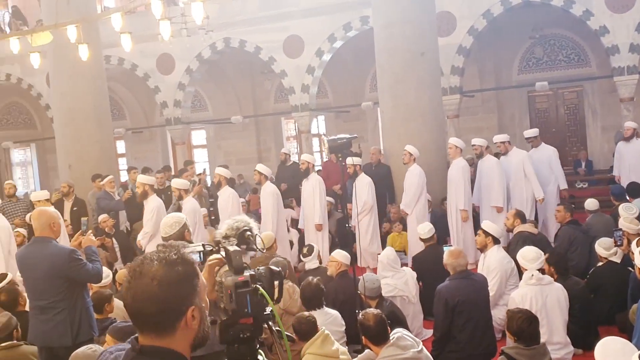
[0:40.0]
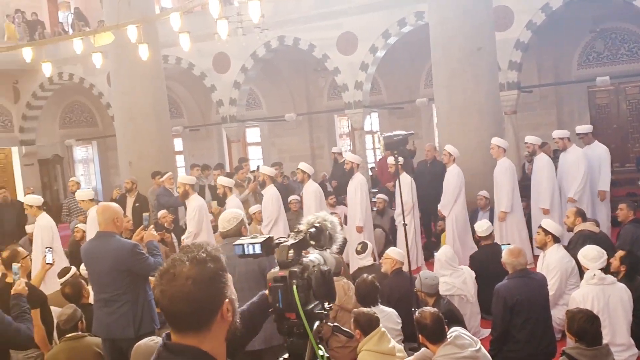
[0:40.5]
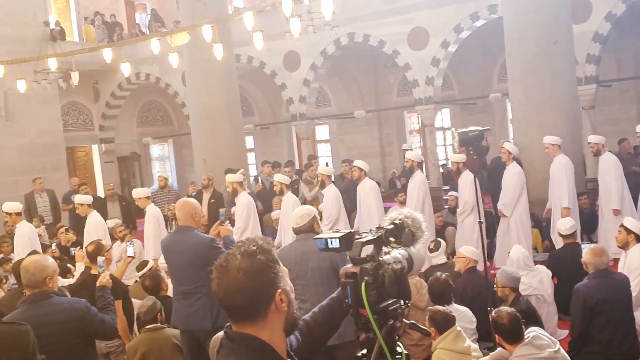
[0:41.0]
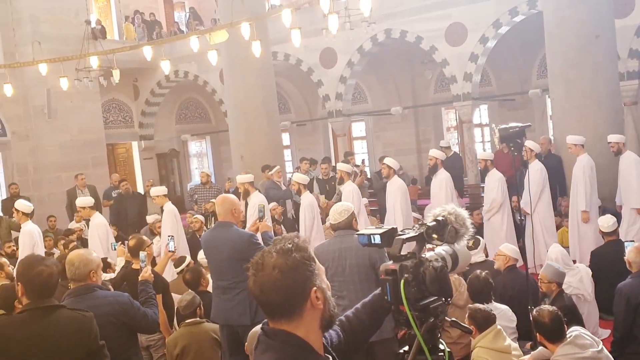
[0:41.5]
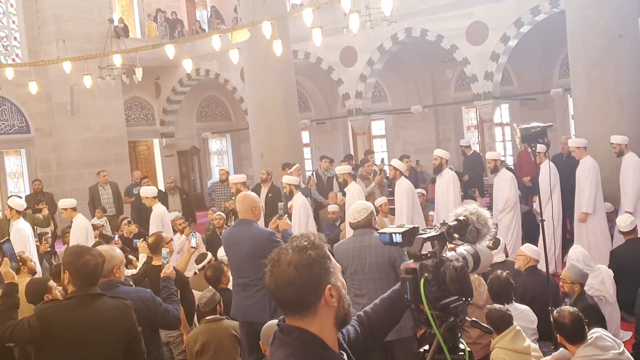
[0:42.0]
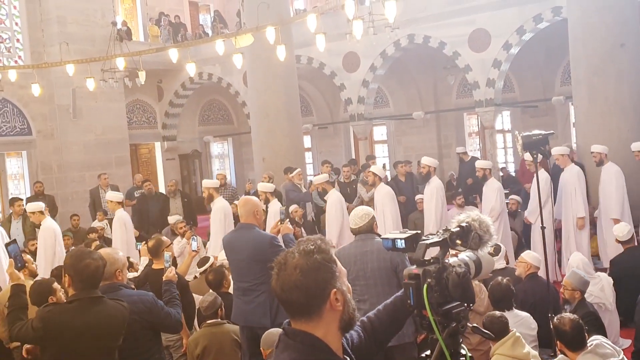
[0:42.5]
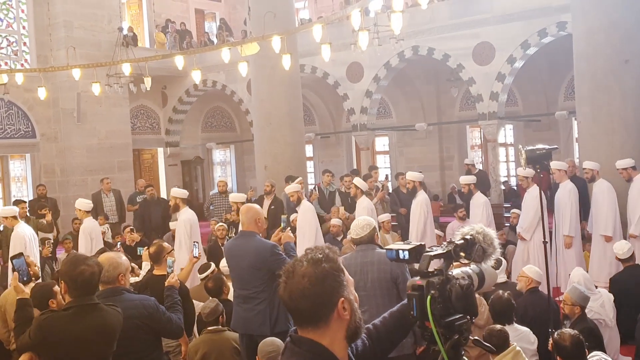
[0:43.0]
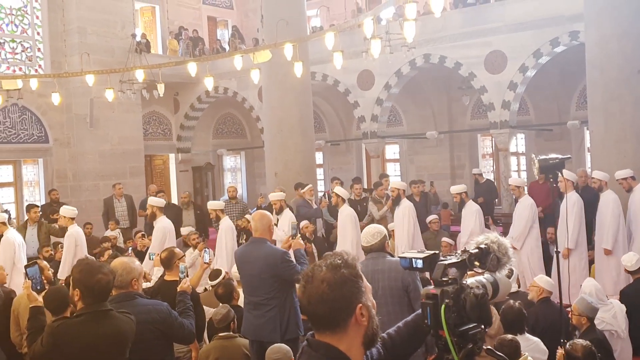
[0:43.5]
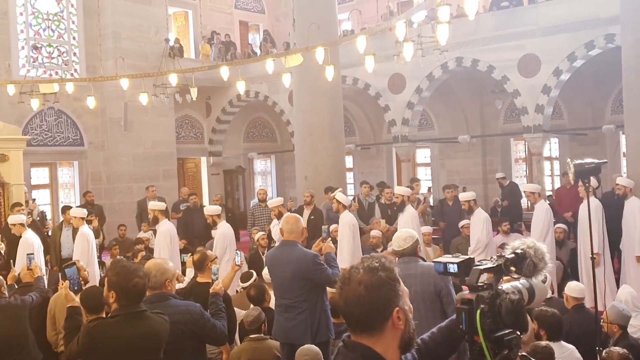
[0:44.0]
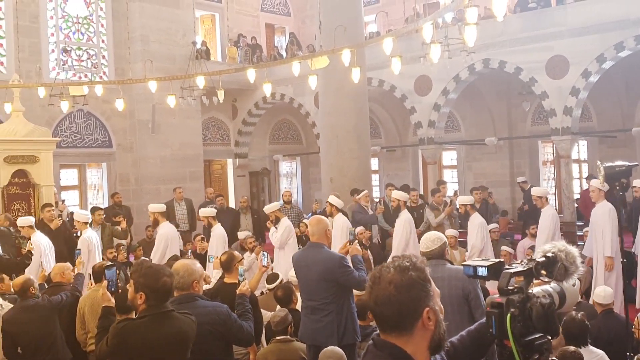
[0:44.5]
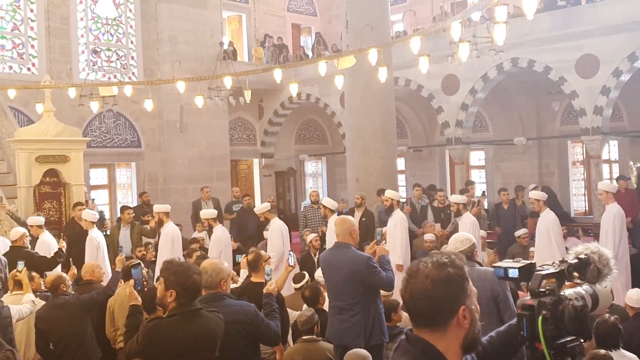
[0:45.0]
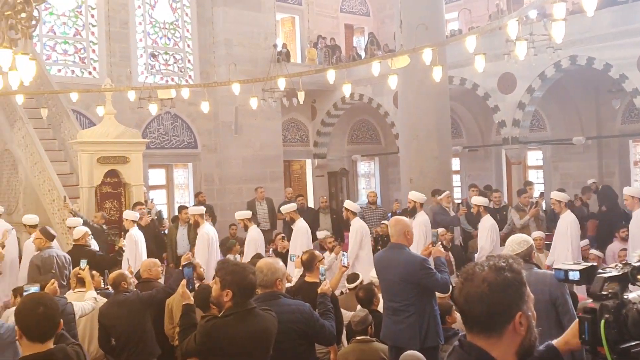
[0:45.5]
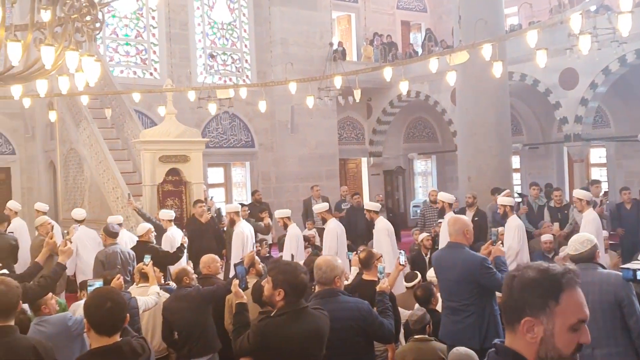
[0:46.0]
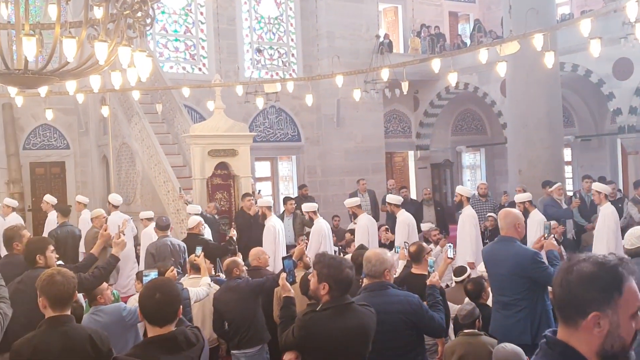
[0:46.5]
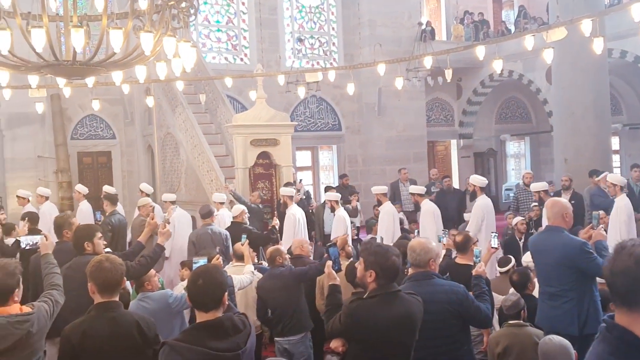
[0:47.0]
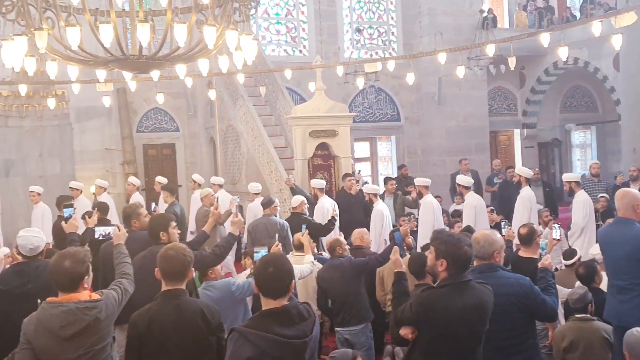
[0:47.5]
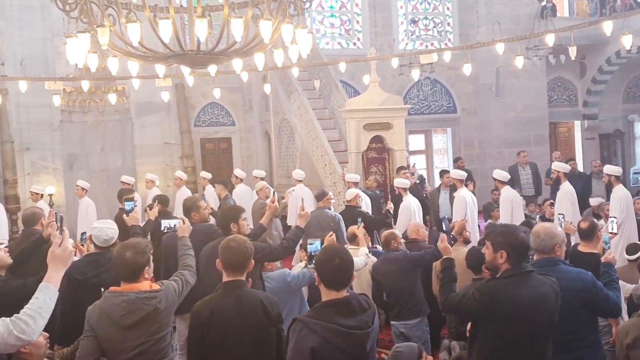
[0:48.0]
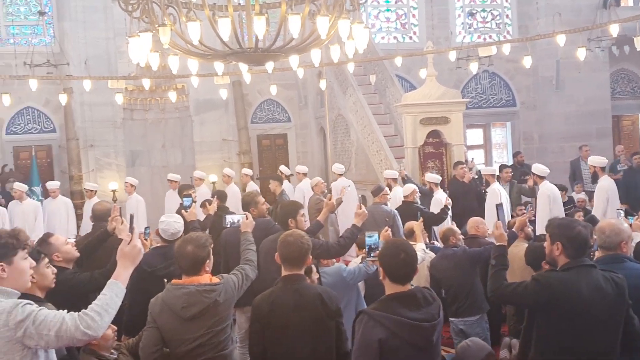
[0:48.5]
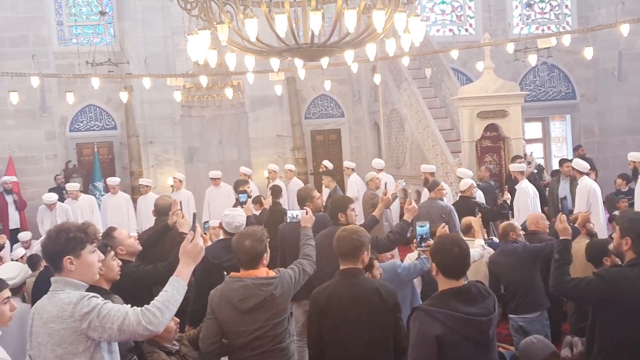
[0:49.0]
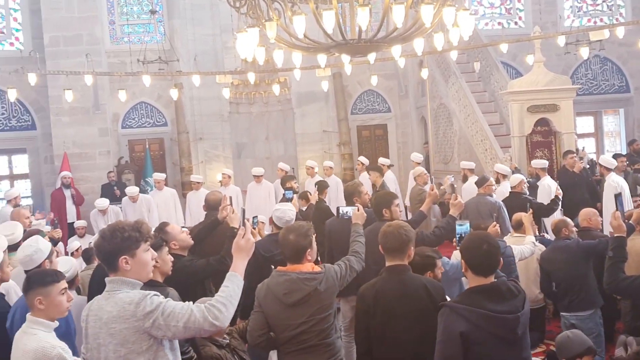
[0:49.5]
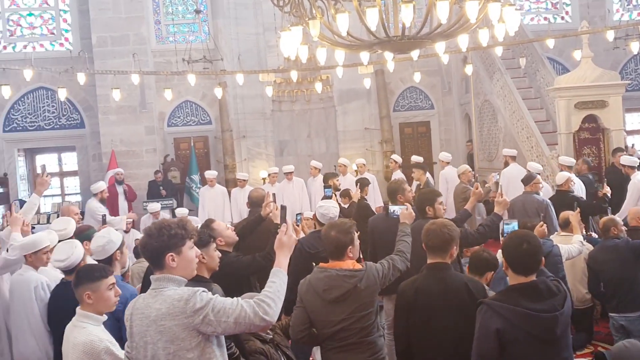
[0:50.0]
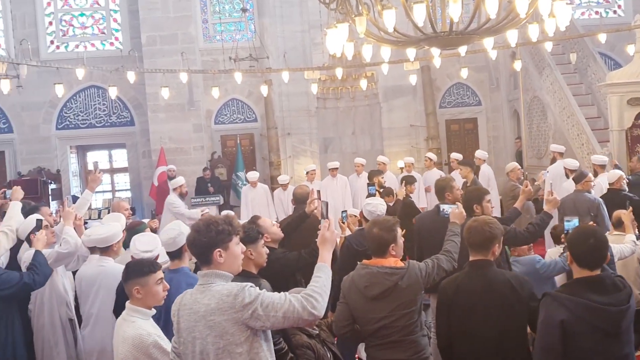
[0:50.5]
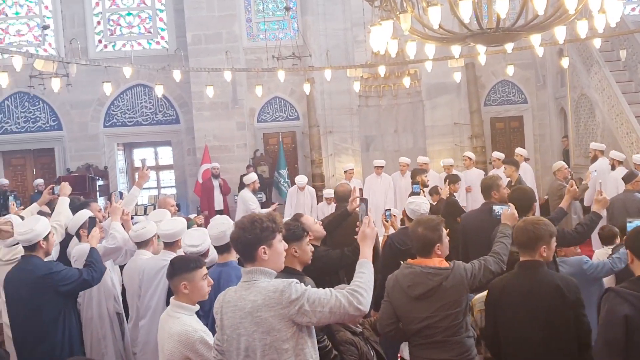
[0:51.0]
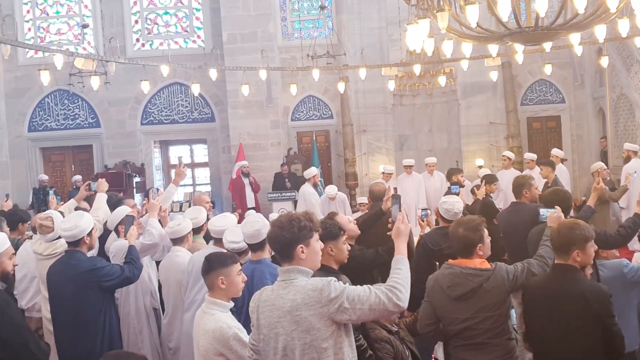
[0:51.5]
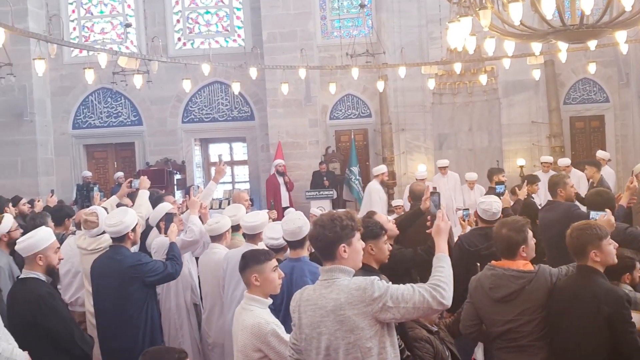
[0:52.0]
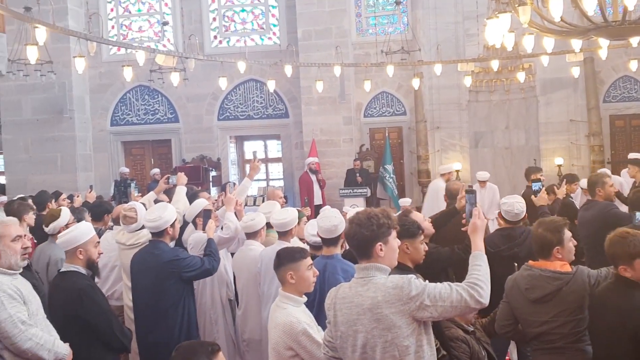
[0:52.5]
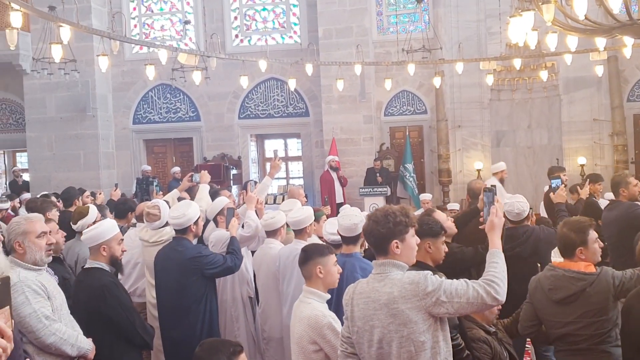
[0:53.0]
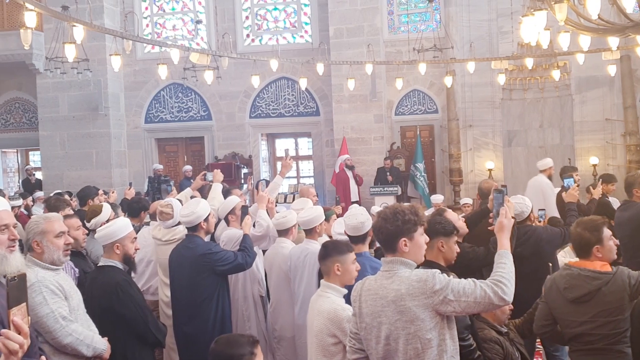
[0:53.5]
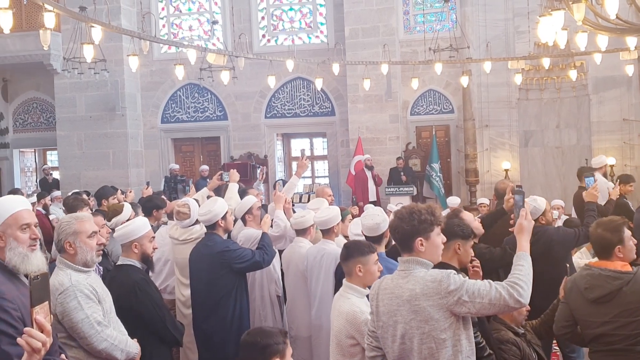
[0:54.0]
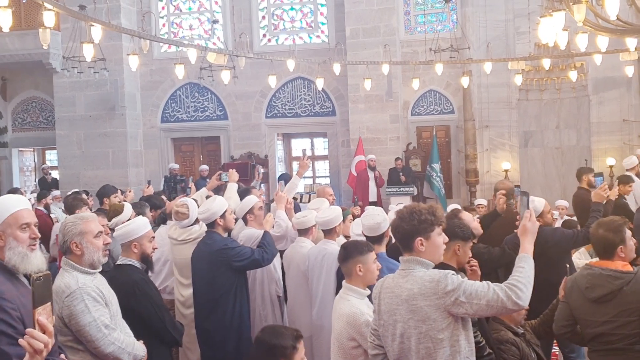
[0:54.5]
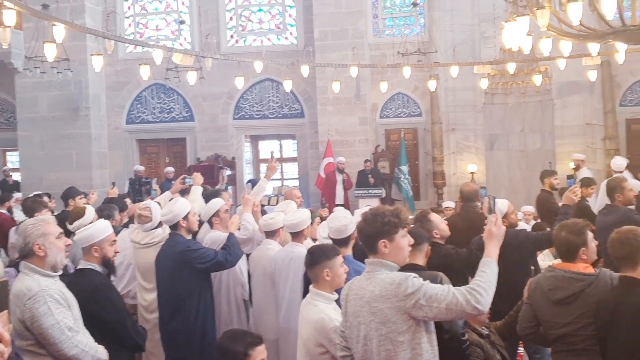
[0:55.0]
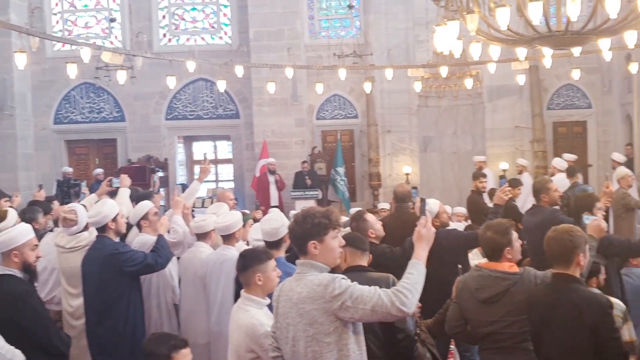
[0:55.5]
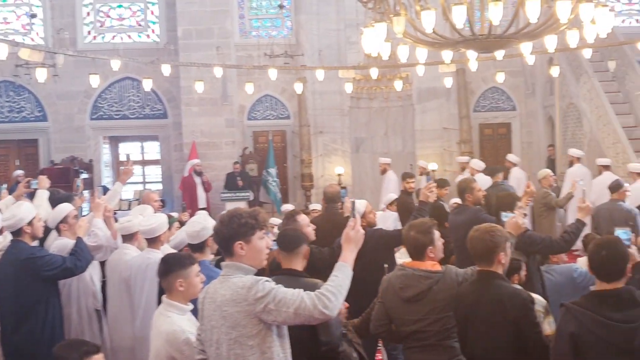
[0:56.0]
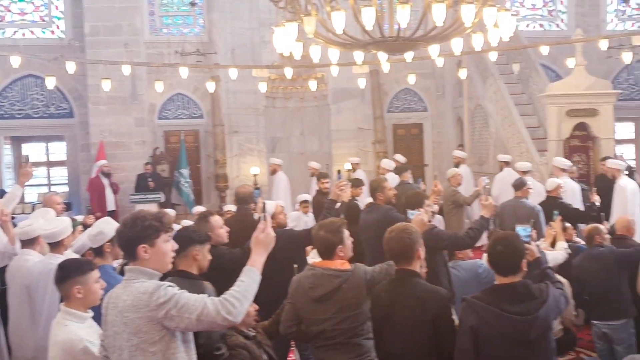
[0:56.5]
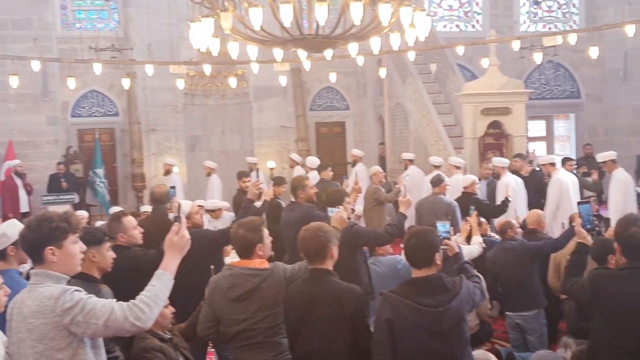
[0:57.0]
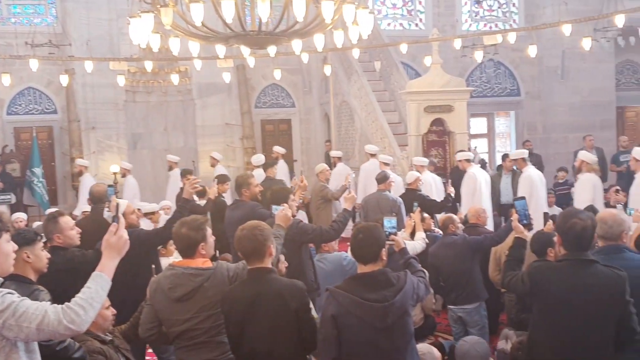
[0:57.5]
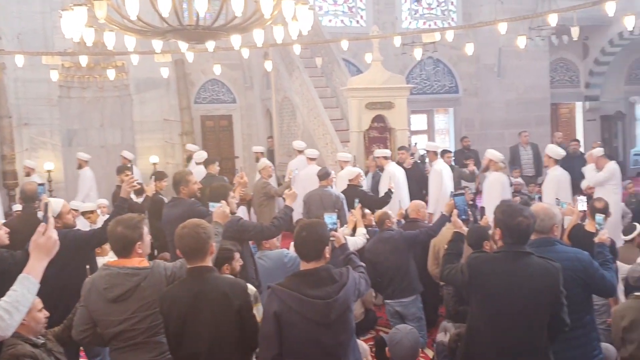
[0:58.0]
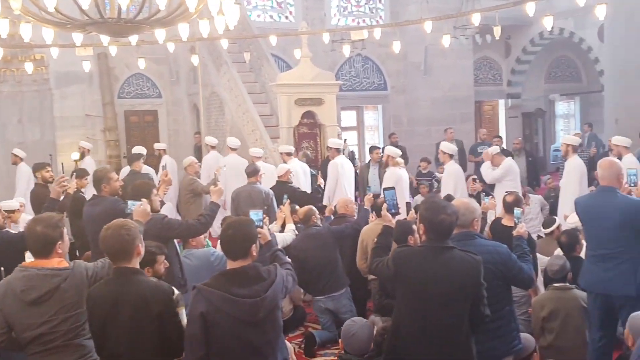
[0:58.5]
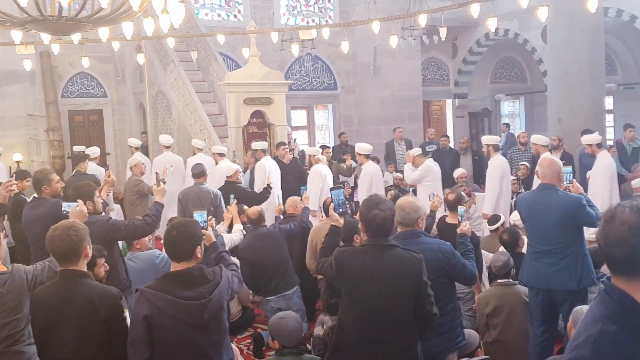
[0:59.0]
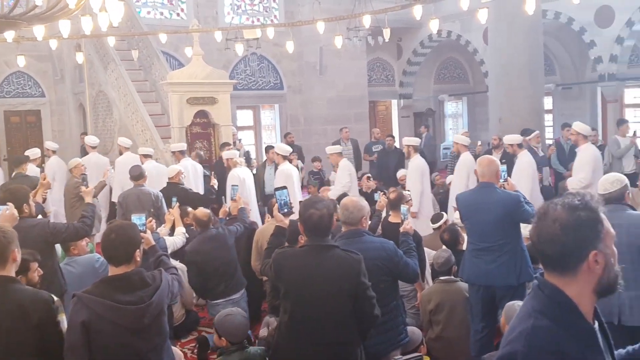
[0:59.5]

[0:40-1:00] In the background, a procession of men has entered a church-like area. The procession is led by a man at the front who is taking some young boys who look like they could be maybe high school age. They all wear white robes that go all the way down to their feet, and white hats. As the procession continues, most of the men further back are older, with beards and mustaches. Spectators in the audience video or snap pictures of the procession. There is a large chandelier toward the top, and above is a balcony where people look down on the event. Many of the men in the background wear the same white hats as the people in the procession, and there are lots of arches with beautiful stone decorations around them.